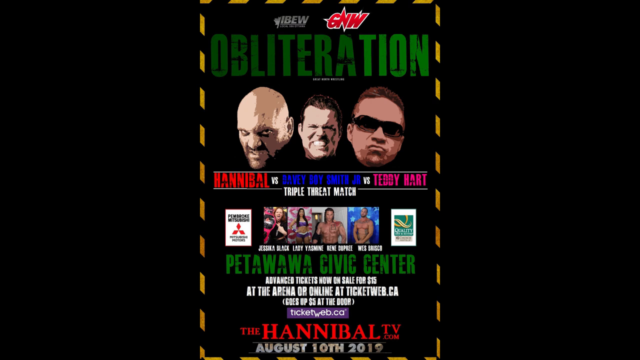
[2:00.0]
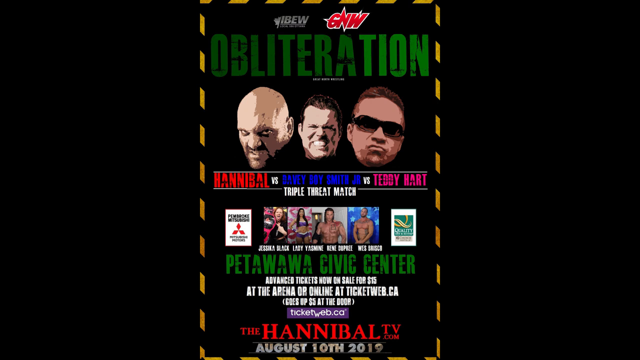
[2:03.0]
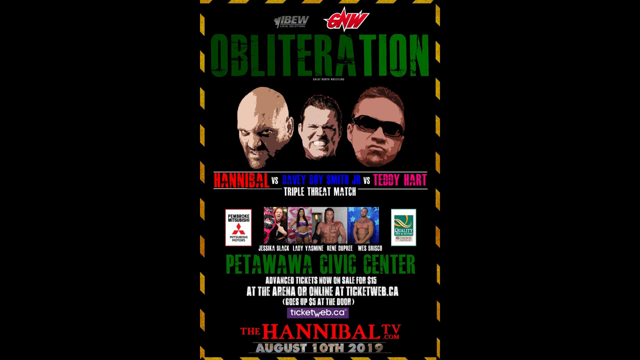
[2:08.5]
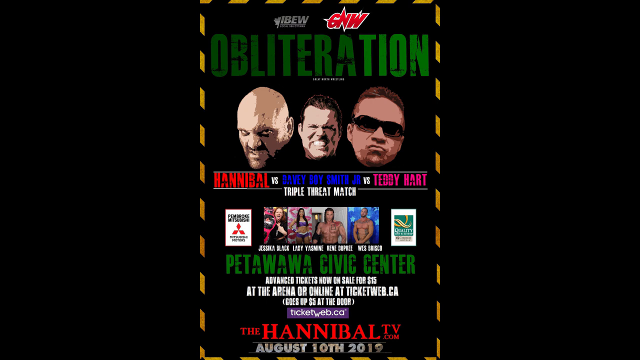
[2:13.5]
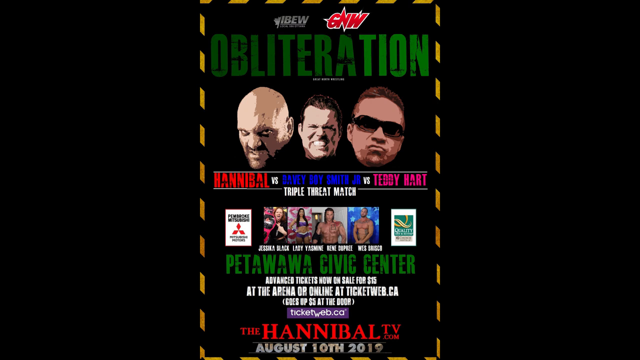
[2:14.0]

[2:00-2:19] A flyer is shown. At the top on the right side are what look like the letters G and W, though the first could be a C, along with the word "Obliteration", and beneath it in green "OBLITERATION". Three faces appear with their chins up, making tough-guy faces and scrunching up their lips and noses; the one on the right wears glasses and tilts his head toward the right. Beneath them, red text reads "Hannibal vs", followed by a name in blue that cannot be read, then "vs TEDDY HART". Below that, white text reads "Triple Threat Match", and below that green text reads "PETAWAWA Civic Center". Further white text is hard to make out but appears to say advance tickets are now on sale, possibly for $15, though the price is unclear.